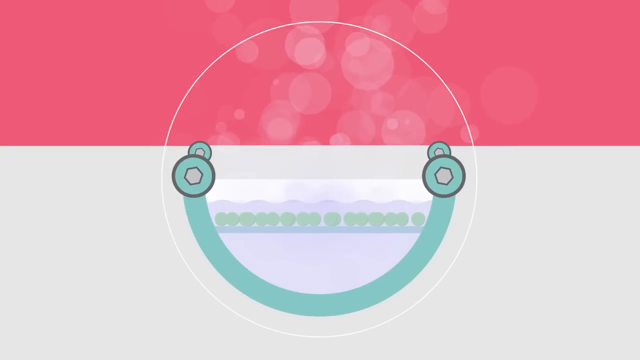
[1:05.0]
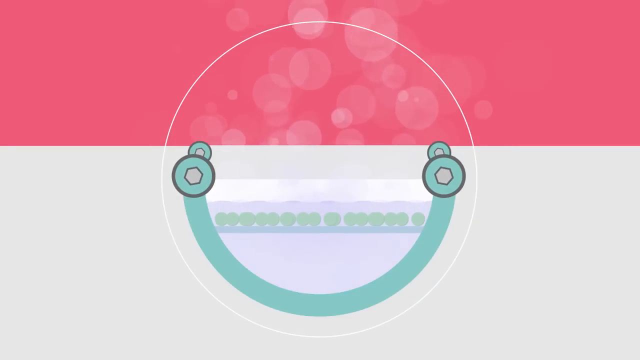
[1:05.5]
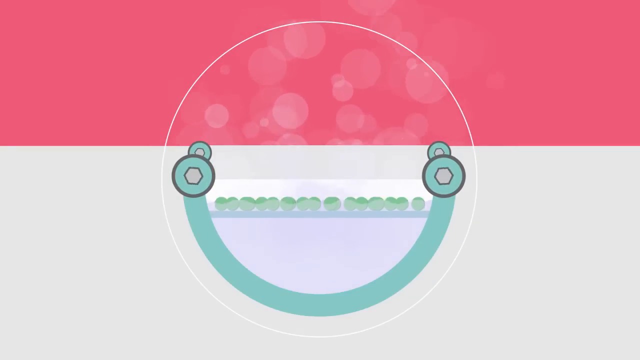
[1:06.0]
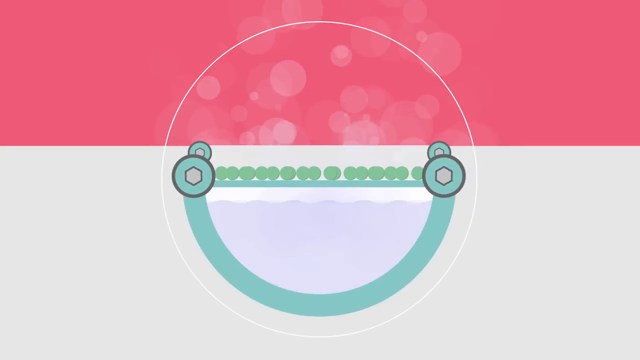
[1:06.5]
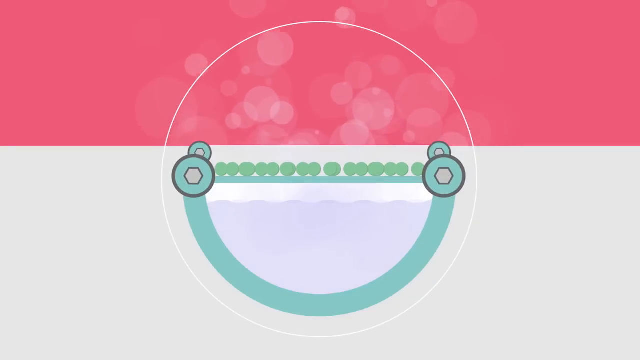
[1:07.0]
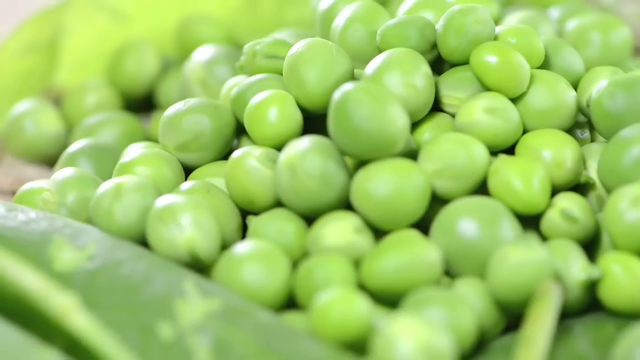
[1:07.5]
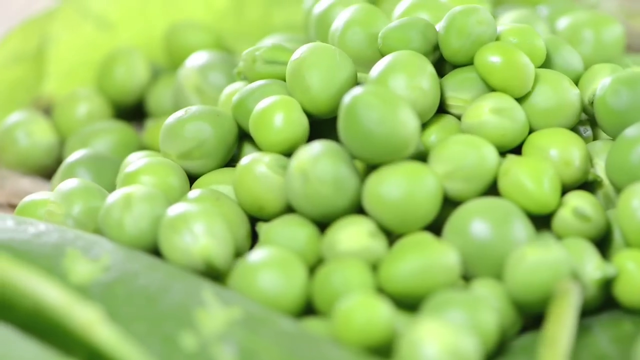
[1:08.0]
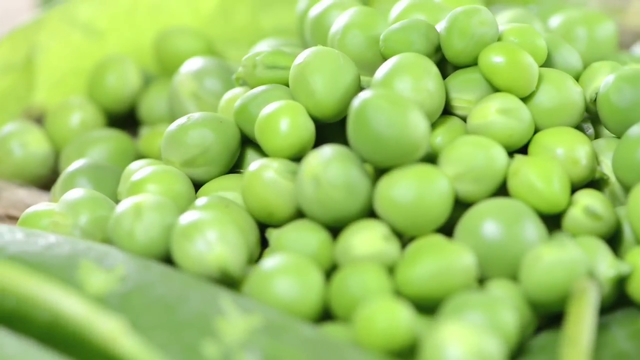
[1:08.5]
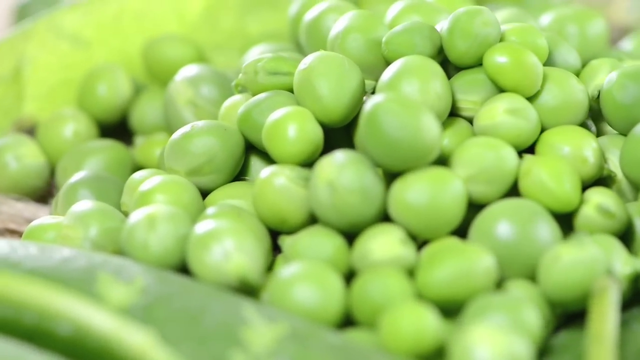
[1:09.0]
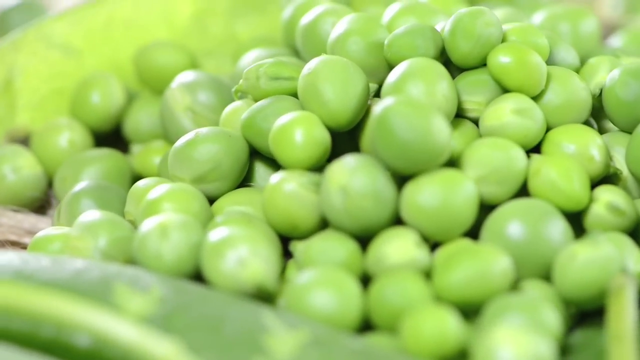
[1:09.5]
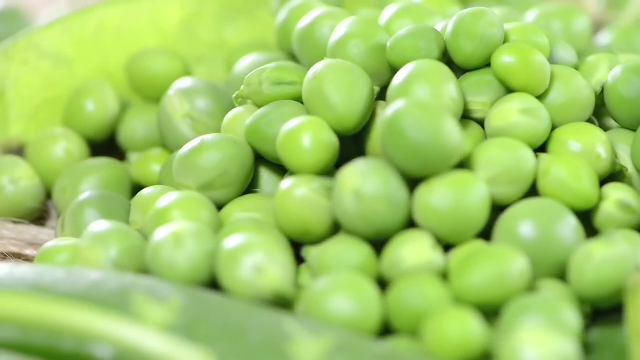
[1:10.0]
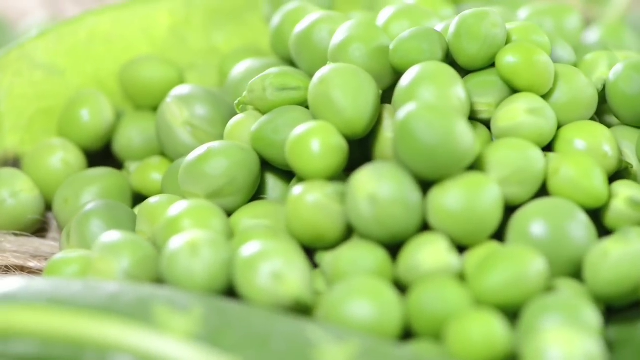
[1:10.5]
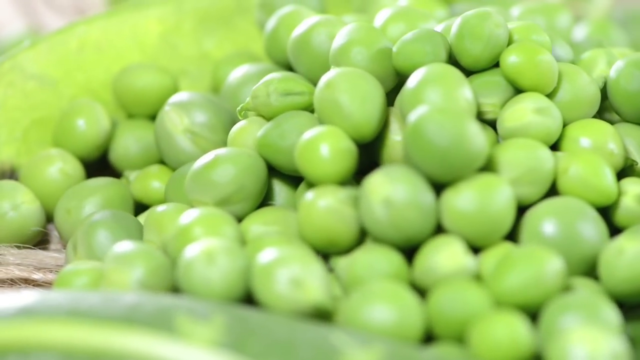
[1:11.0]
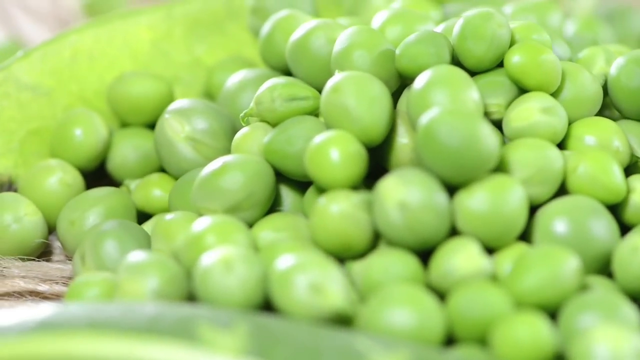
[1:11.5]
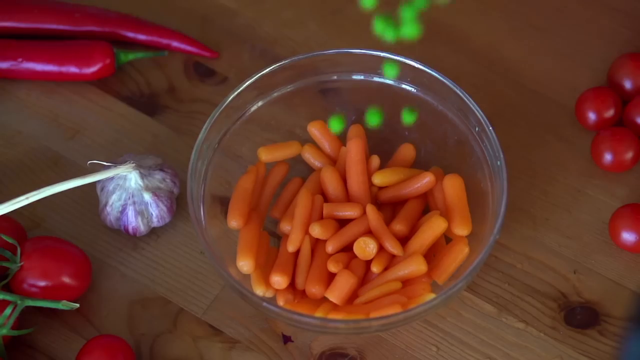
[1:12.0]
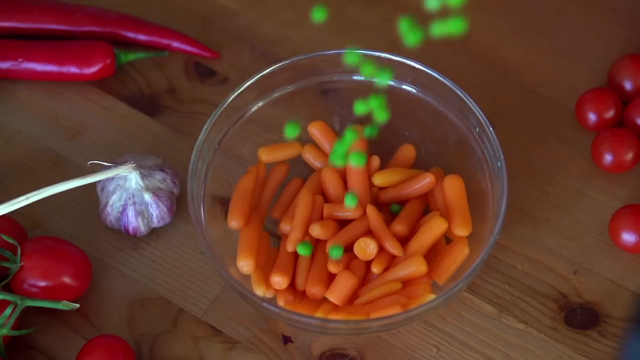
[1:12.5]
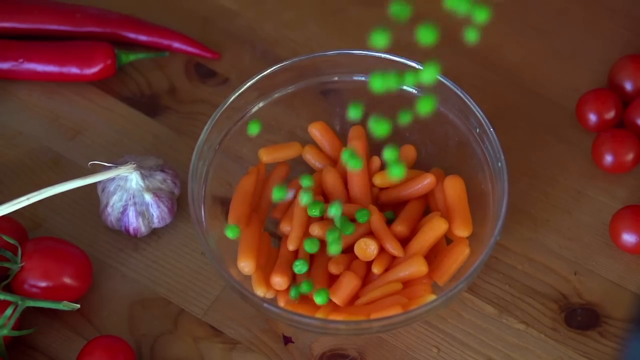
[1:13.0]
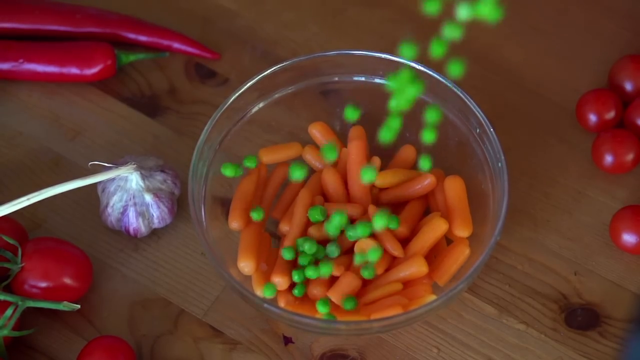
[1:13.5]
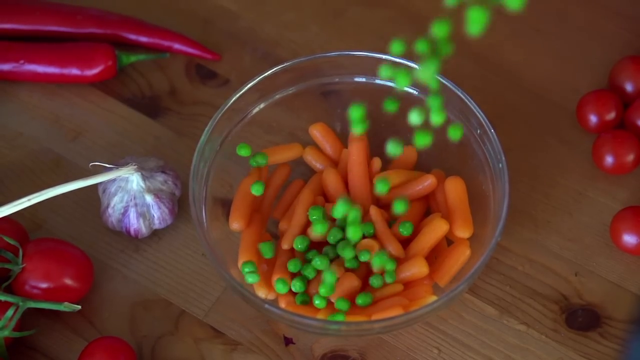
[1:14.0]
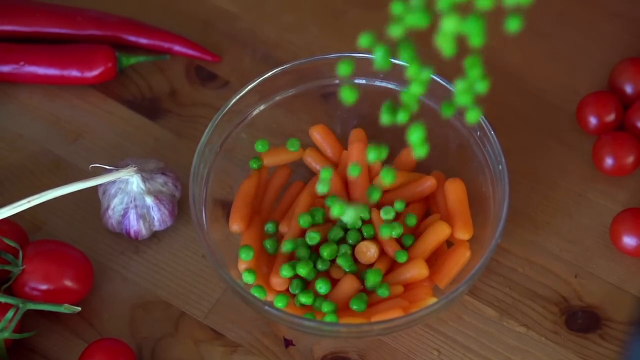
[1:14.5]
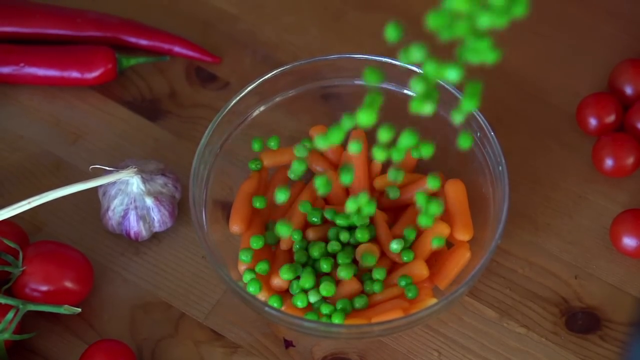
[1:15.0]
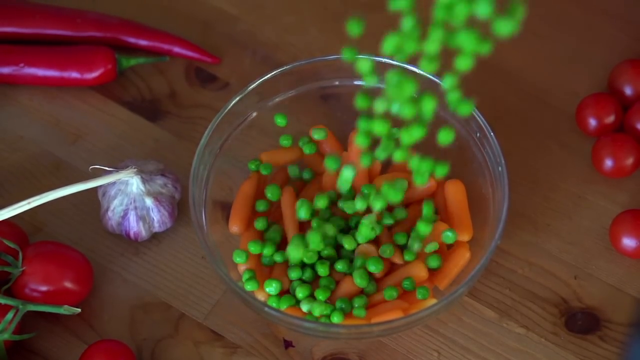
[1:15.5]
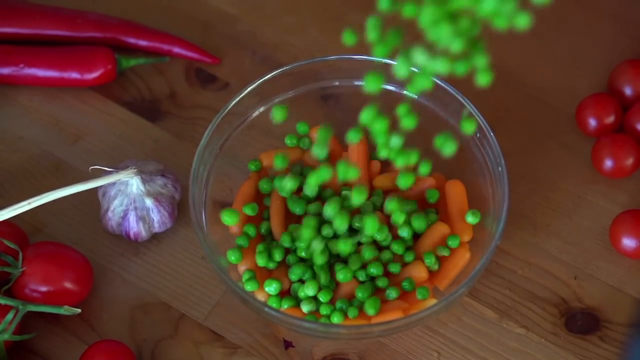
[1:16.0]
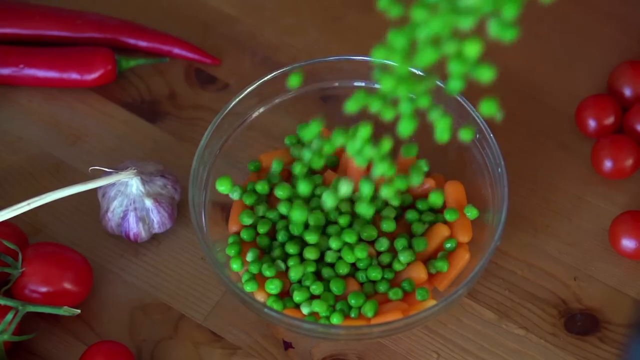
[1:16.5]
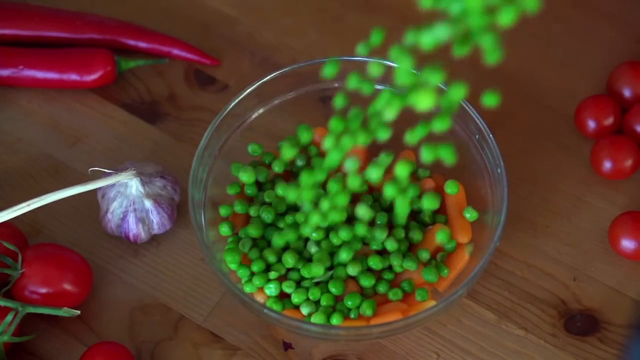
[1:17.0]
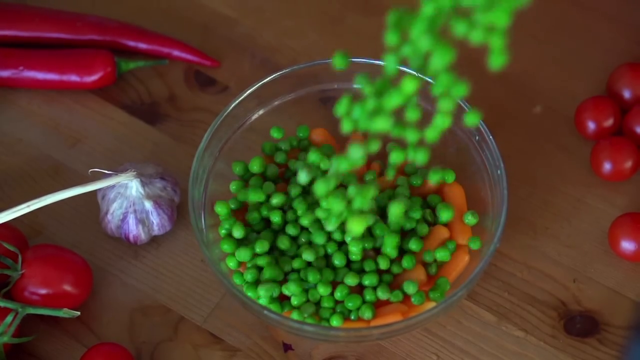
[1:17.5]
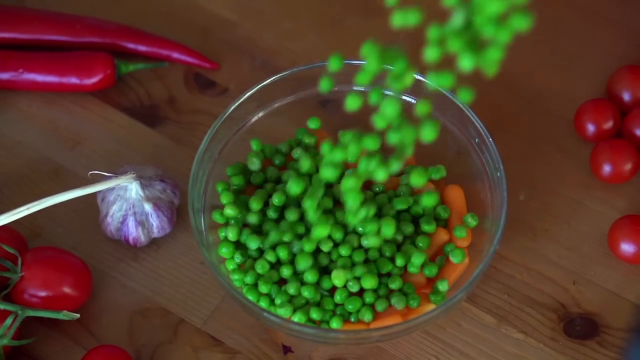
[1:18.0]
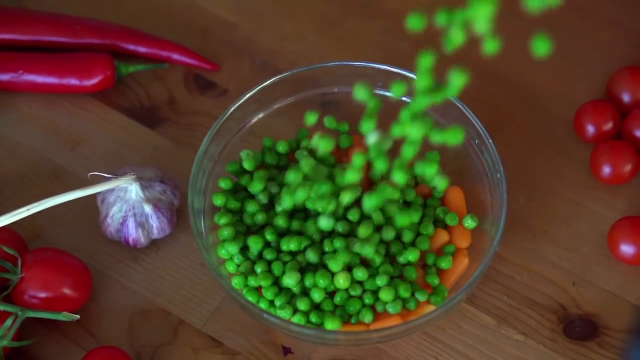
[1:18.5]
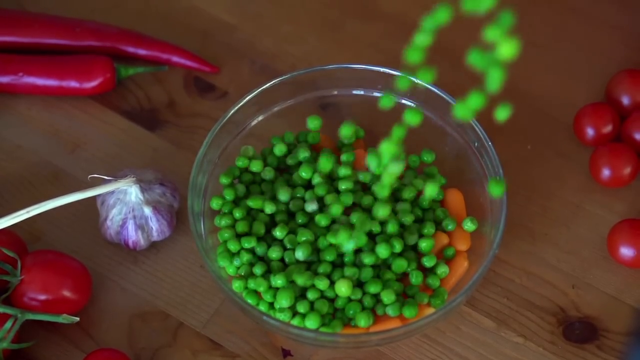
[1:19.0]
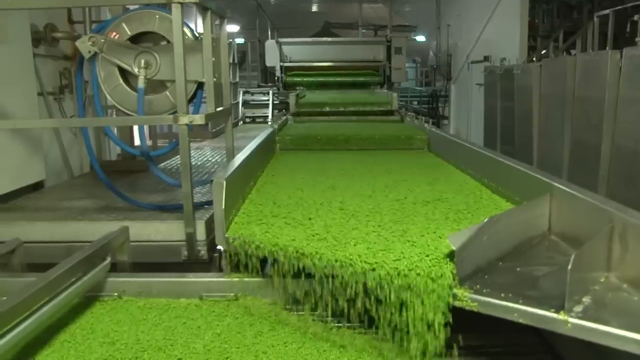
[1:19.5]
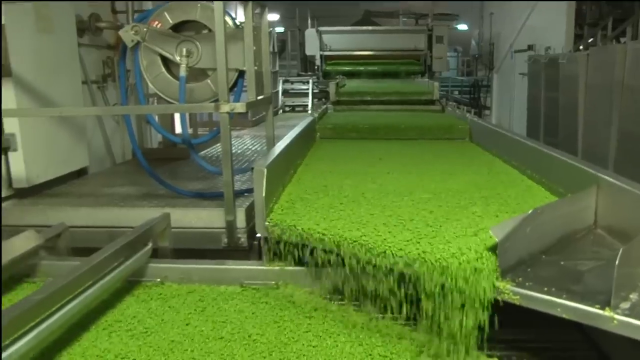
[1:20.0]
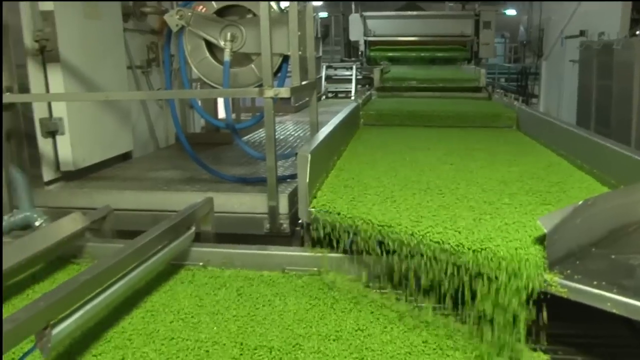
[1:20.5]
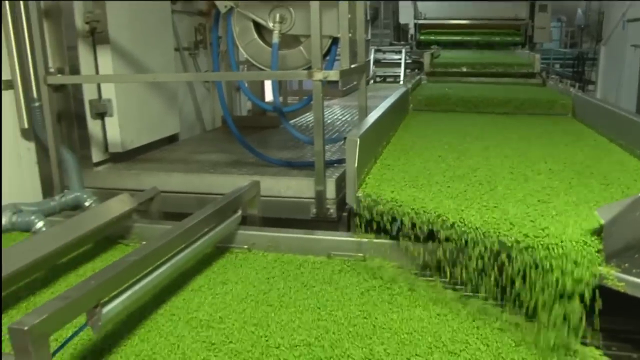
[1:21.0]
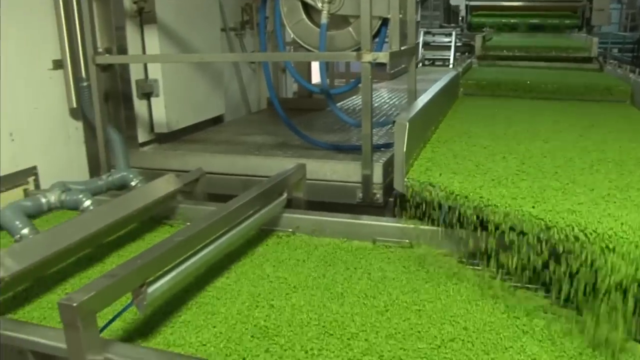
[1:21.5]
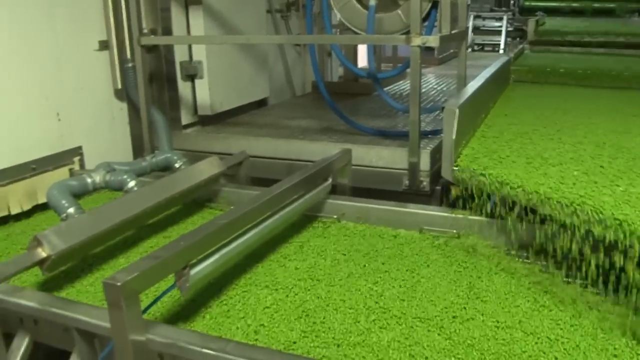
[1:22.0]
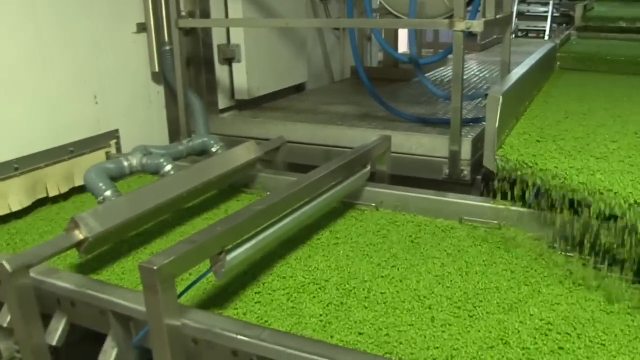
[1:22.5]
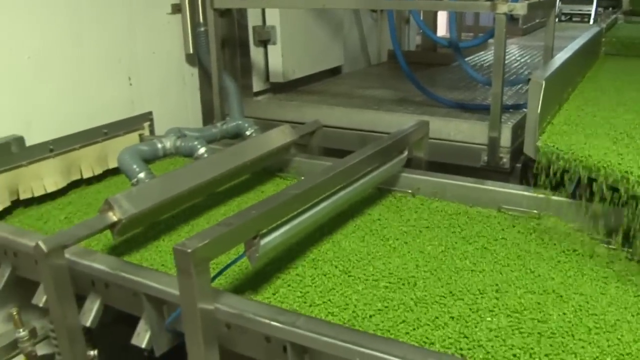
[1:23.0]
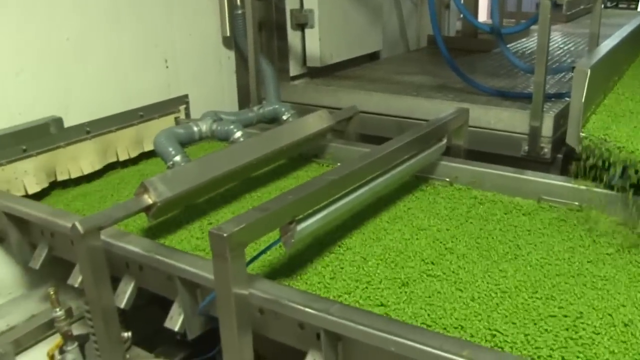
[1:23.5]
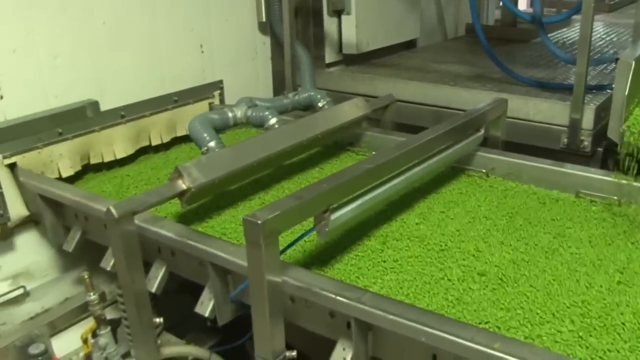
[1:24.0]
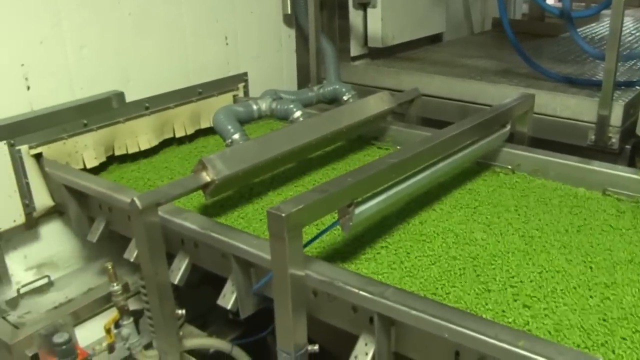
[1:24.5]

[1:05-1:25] Another illustration shows the peas being harvested and processed in the factory to be shipped out. A very close-up shot of a bunch of peas follows. Then a tabletop holds tomatoes, hot peppers and onion, with a bowl in the middle of the shot; someone out of frame pours shelled peas directly into the bowl, and the shot holds for a few seconds. The bowl also contains multiple washed orange carrots, which the peas cover. The scene then returns to the factory, where a large number of peas roll down a type of conveyor belt.